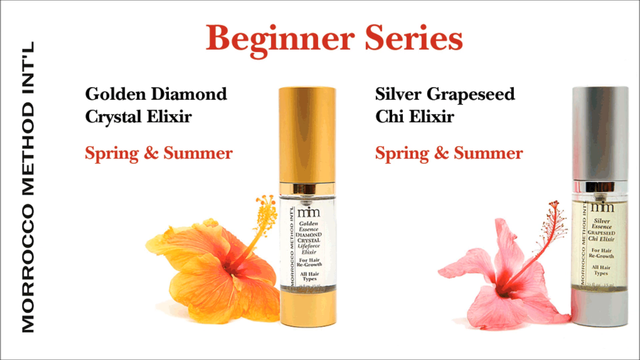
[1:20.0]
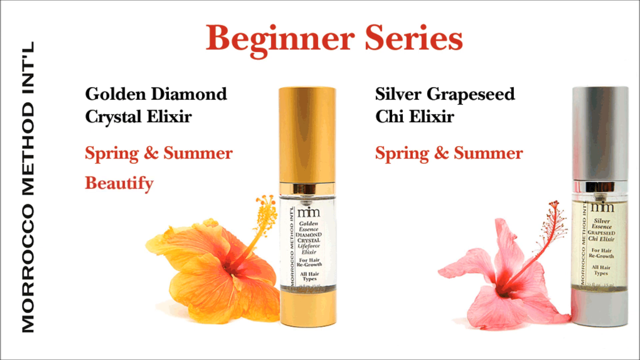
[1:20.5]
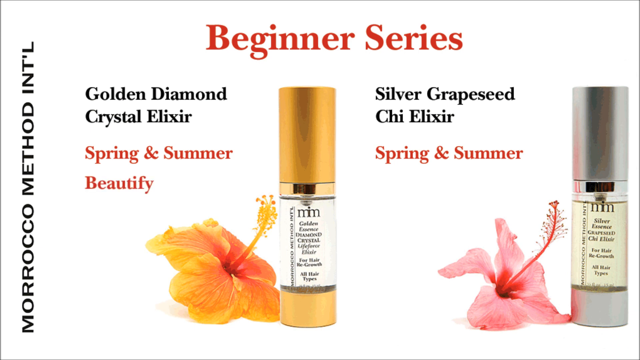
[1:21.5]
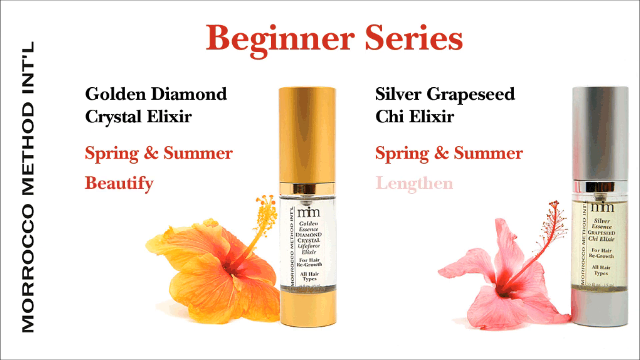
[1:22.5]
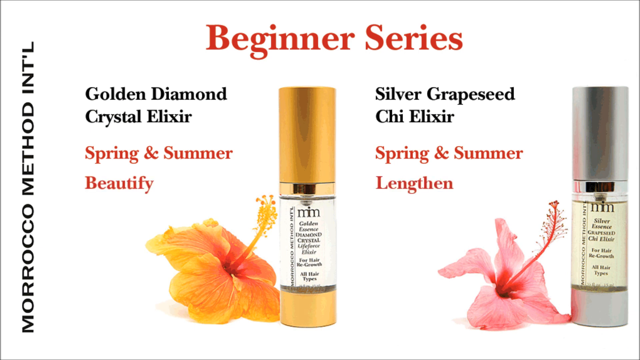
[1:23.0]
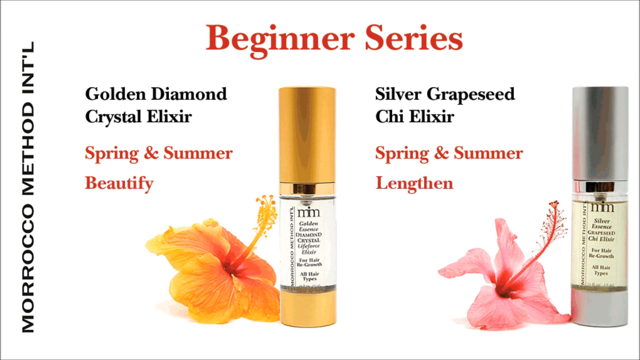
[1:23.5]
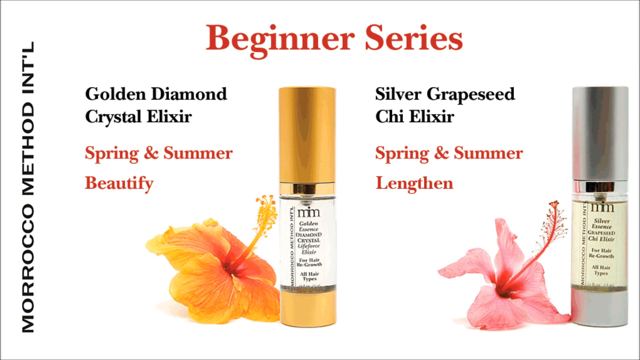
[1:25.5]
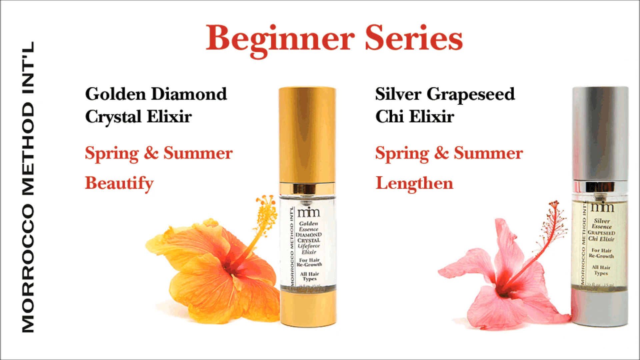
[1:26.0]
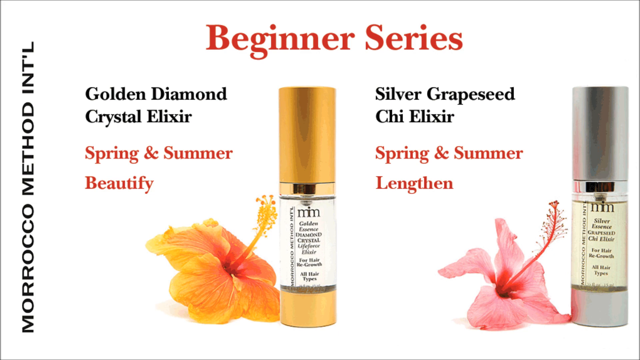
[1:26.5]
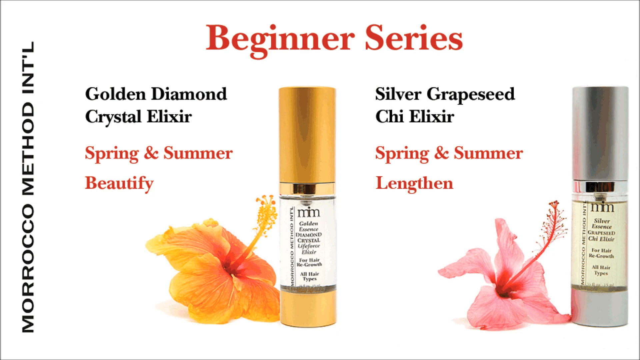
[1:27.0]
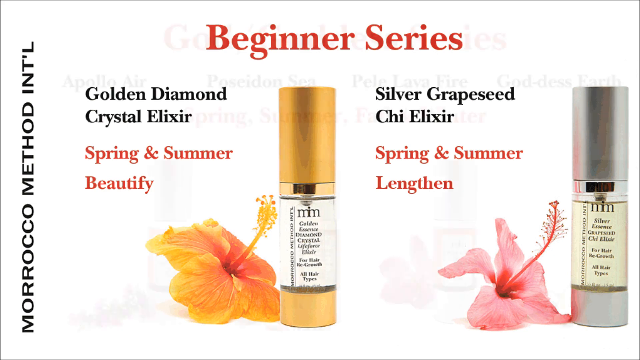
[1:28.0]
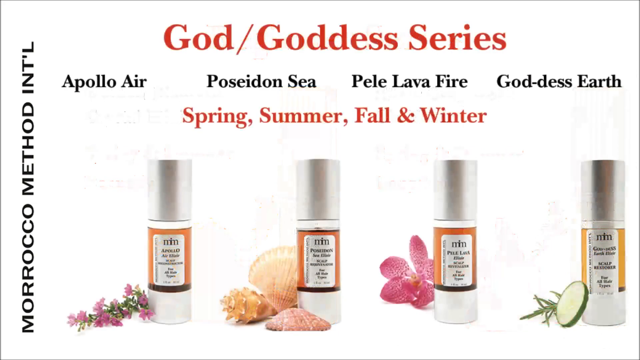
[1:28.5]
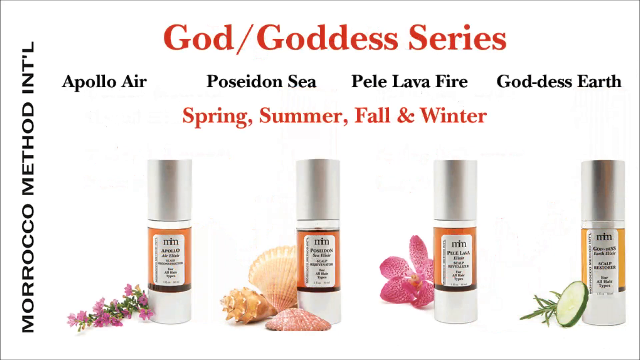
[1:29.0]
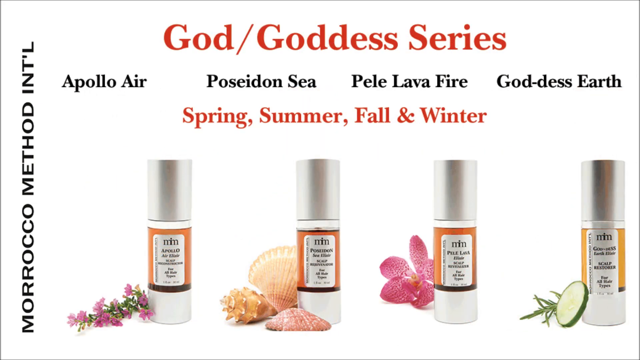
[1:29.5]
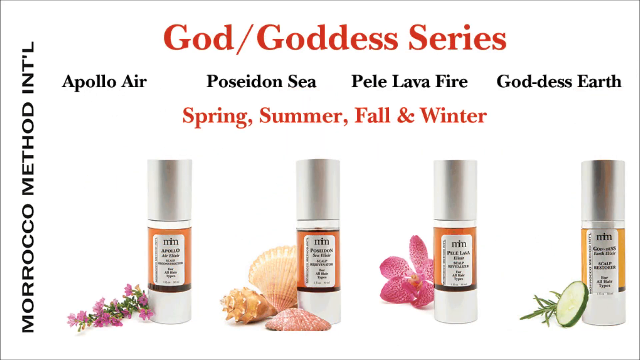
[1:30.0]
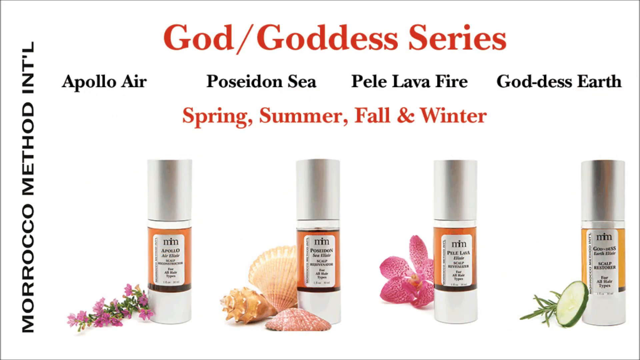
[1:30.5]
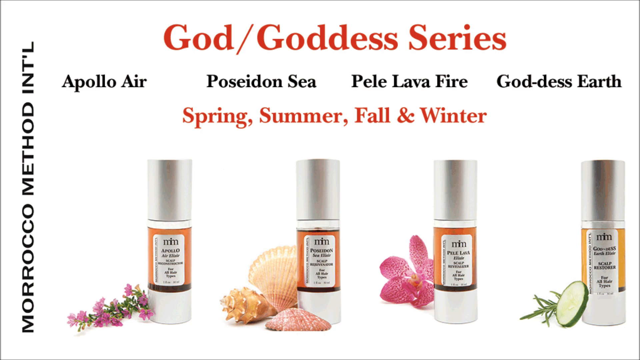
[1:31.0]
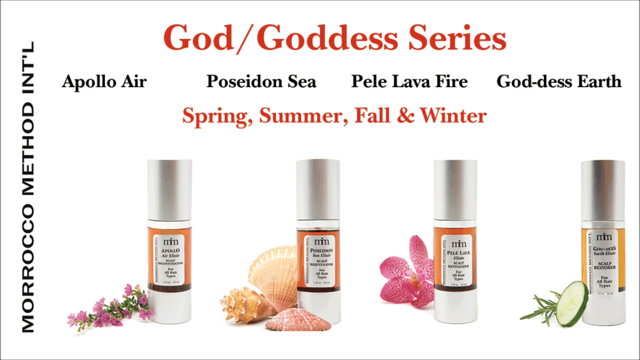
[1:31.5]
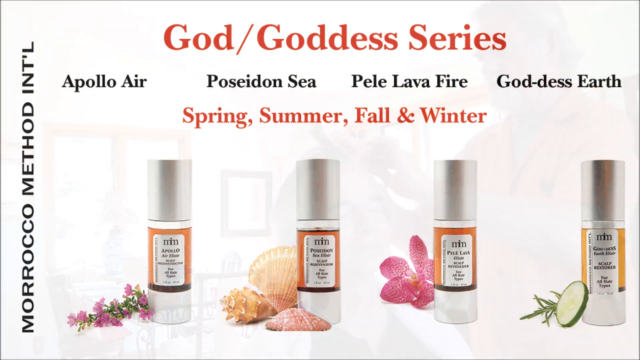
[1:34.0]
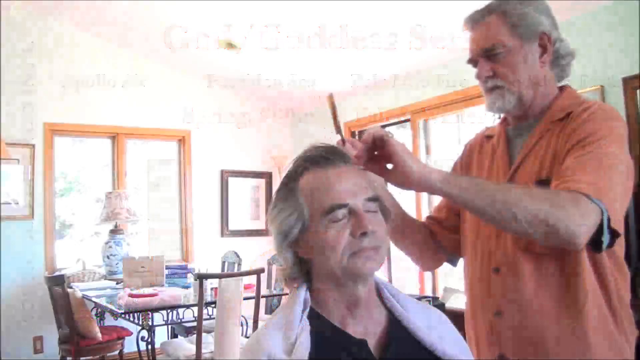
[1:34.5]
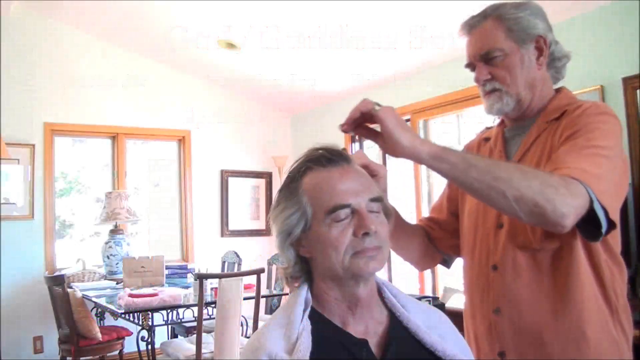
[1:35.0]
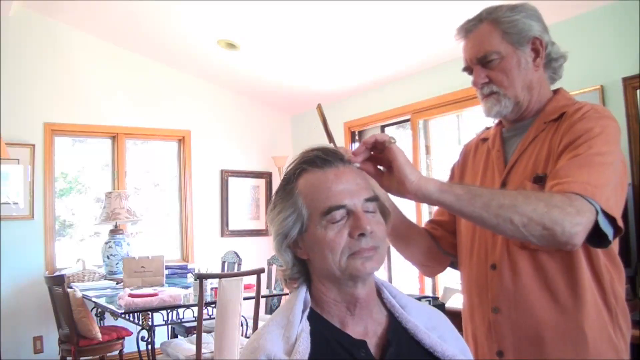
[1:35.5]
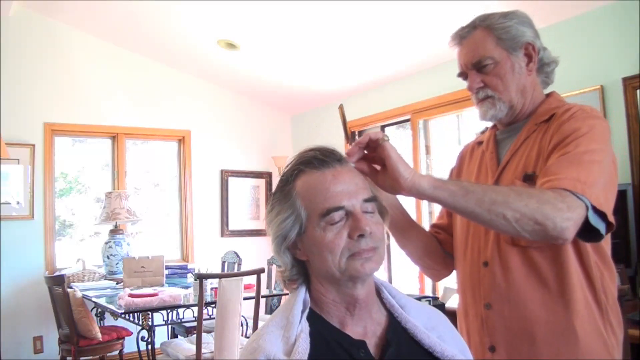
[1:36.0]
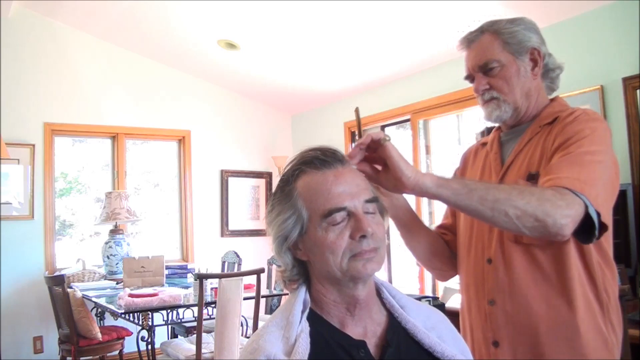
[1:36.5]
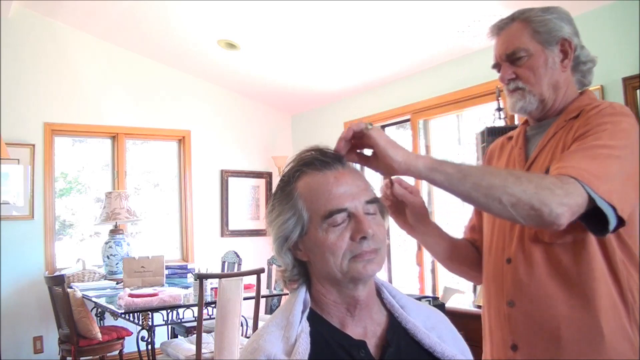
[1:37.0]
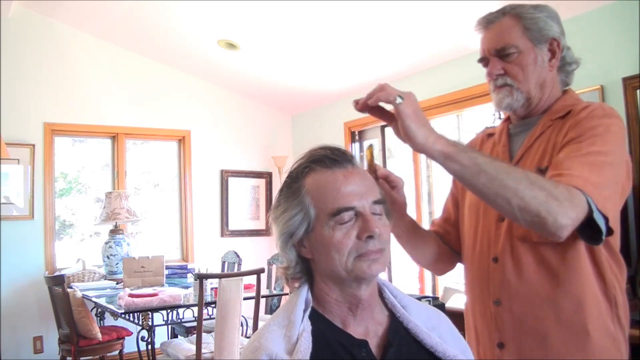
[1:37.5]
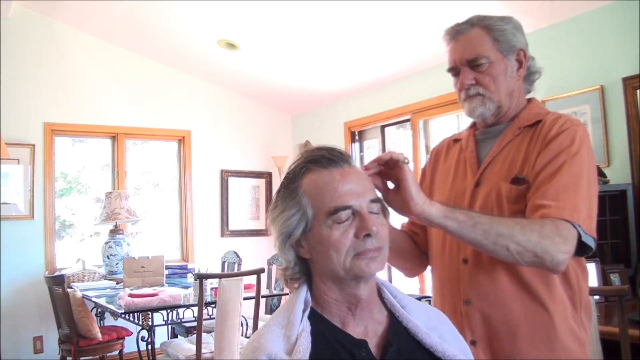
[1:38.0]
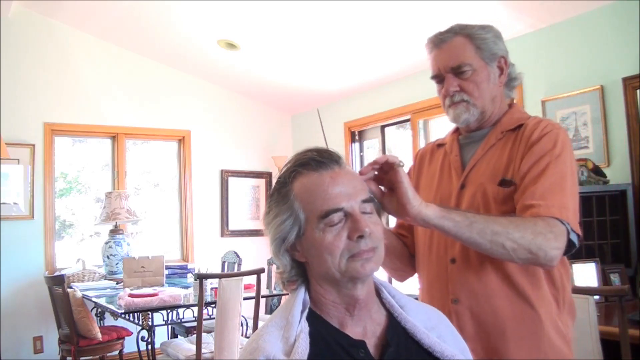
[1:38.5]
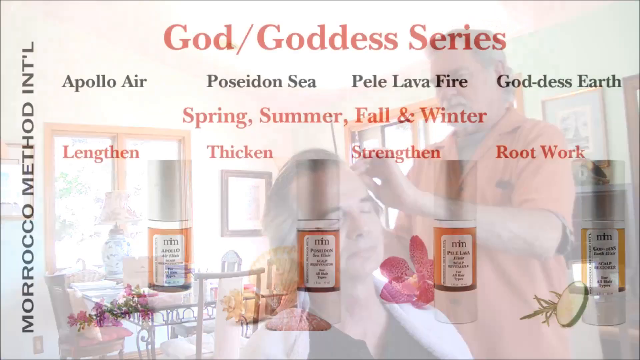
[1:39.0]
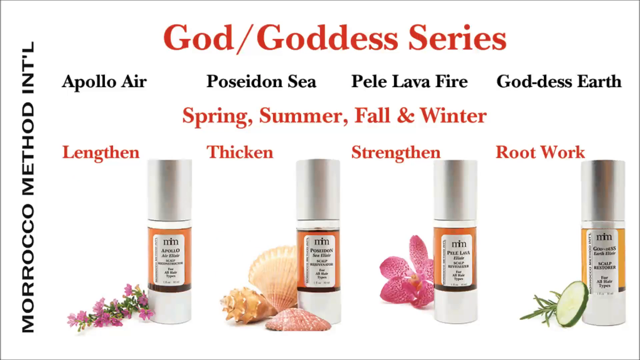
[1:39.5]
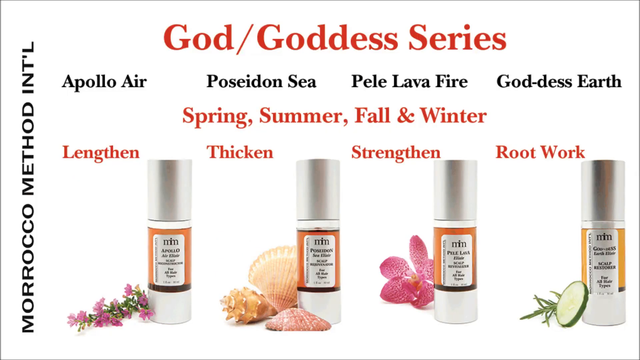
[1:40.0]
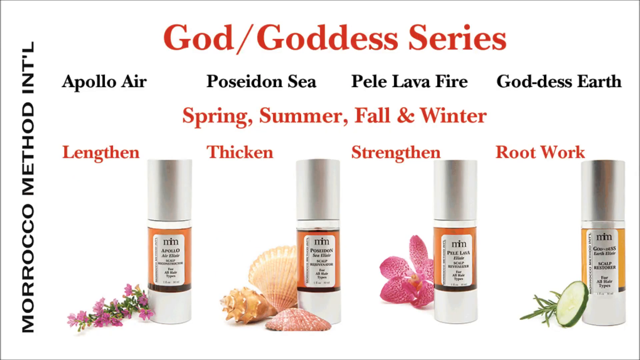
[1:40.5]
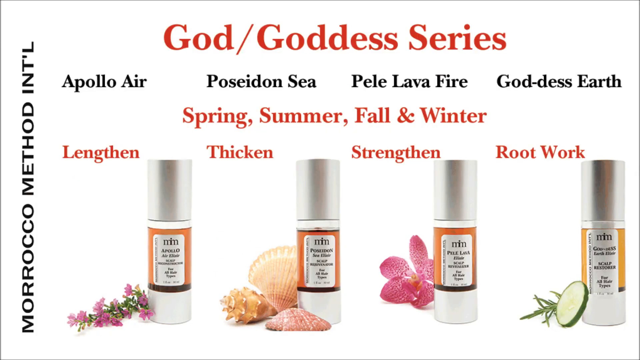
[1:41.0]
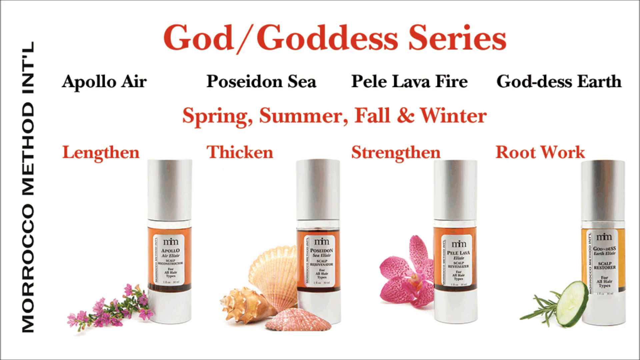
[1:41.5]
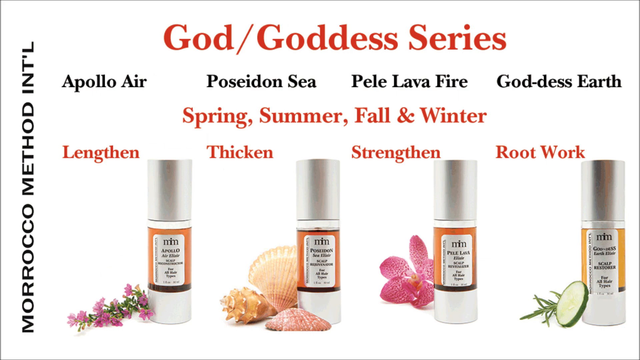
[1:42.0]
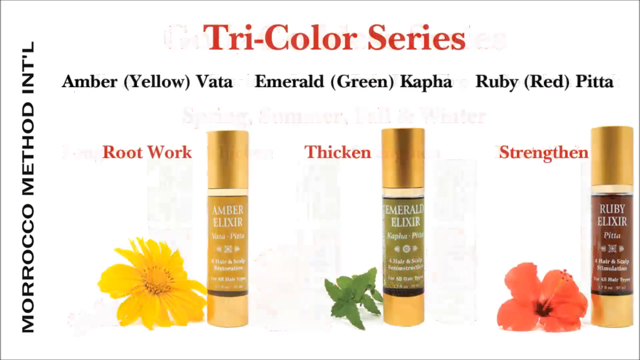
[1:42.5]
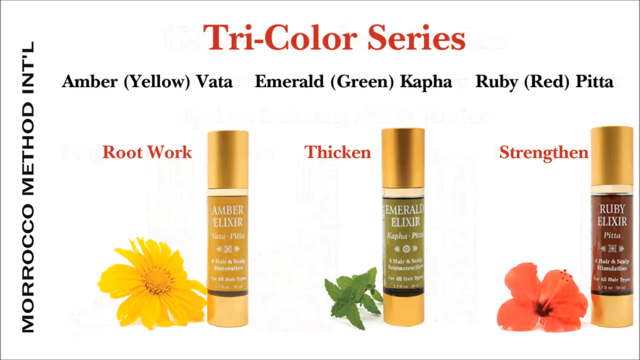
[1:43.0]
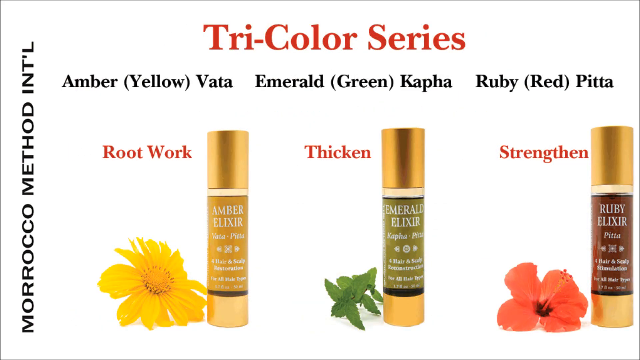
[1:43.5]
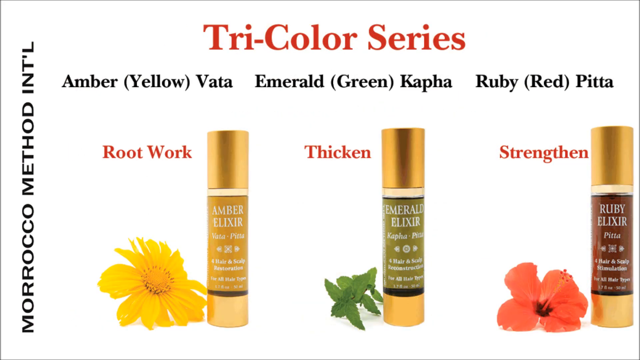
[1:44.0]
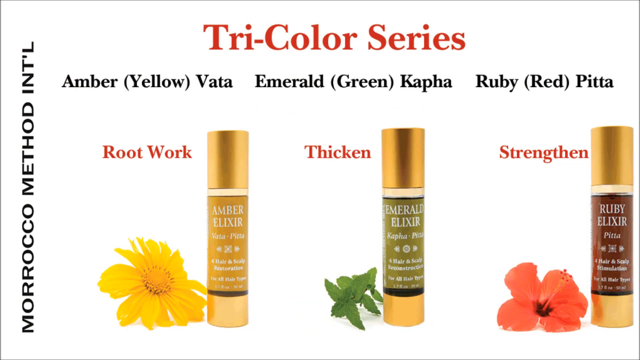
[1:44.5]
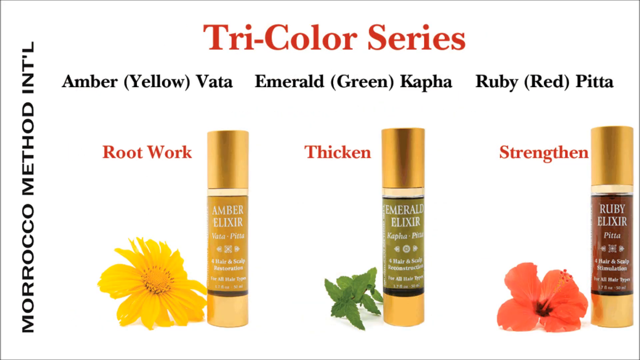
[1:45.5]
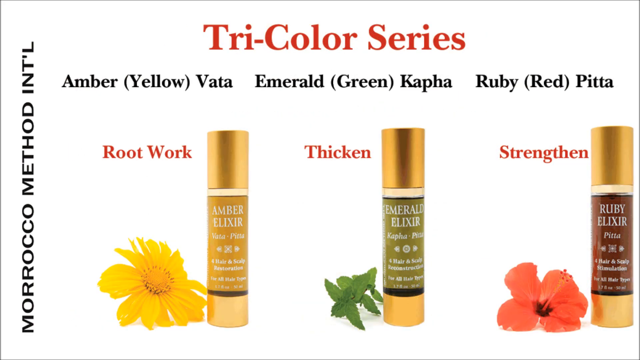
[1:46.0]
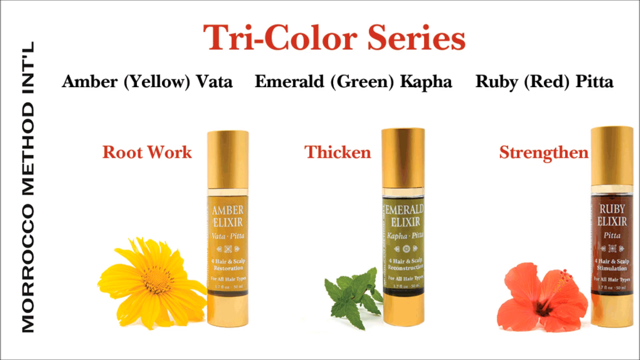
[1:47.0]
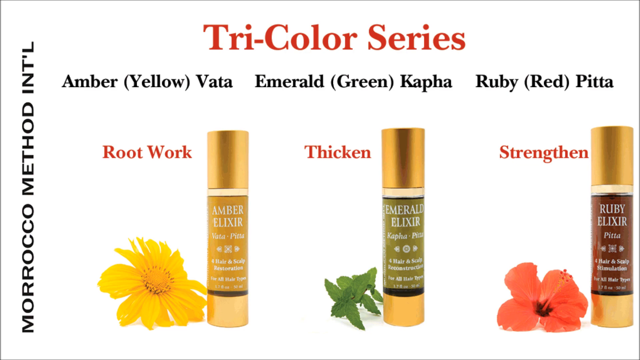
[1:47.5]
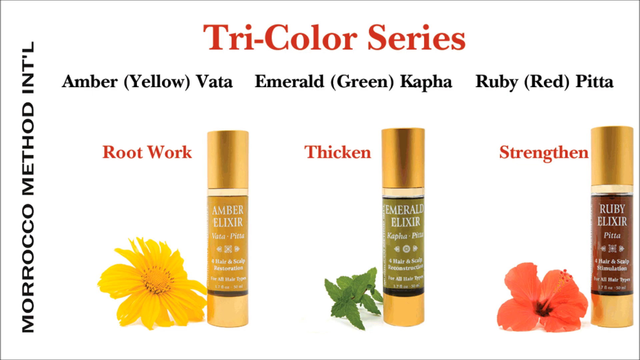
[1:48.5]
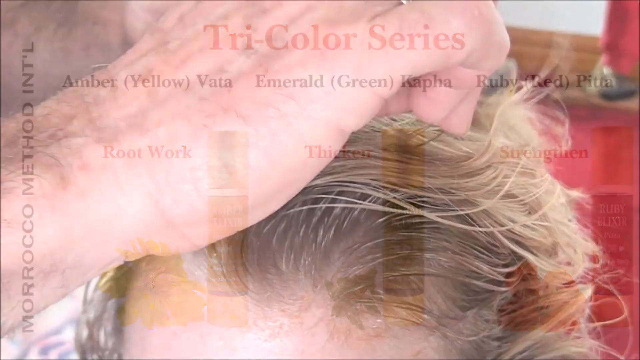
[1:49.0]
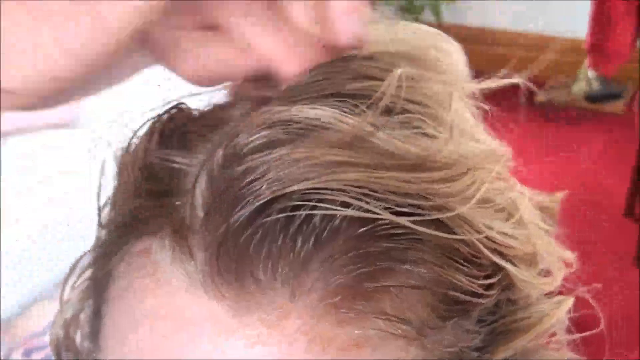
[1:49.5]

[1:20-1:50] The beginner series information screen shows the golden diamond crystal elixir for spring and summer beside a gold-colored product with a yellow flower leaning against it, and the silver grapeseed Qi elixir for spring and summer beside a silver-colored bottle with a pink daisy-type flower next to it. Vertical text reads "Morocco method international." Text then appears reading "beautified" next to the golden diamond crystal elixir and "lengthen" next to the silver grapeseed Qi elixir. A different information screen shows four similar silver-colored bottles with a brown midsection and a white label with black writing, under the text "the God and goddess series." Each product has a specific name: "Apollo air," "Poseidon sea," "Pele lava fire" and "goddess earth," with "spring," "summer," "fall" and "winter" beneath that text. Next to each bottle is a different object: a pink and green wildflower, three seashells, a flower with petals, perhaps a daisy, and a cucumber and sage, probably indicating the ingredient in each. The video returns to the stylist working on the client's hair. The client sits with his eyes closed, wearing a black shirt with a white towel draped around his shoulders; the stylist wears a peach-colored shirt with a gray T-shirt under it. They are in what looks to be a home, and a glass table is visible. Another information screen shows each of the four bottles with a word next to it describing what it does: "lengthen," "thicken," "strengthen," and a fourth word for the final bottle. A further informational screen reads "tricolor series" and shows three bottles with gold tops and bottoms: the first with an amber midsection, the second with a green midsection and the third with a ruby red midsection. The text reads "Amber Yellow Vata," "Emerald Green Kaffa" and "Ruby Red Pita," and next to each bottle is what it does: "root work," "thicken" and "strengthen."